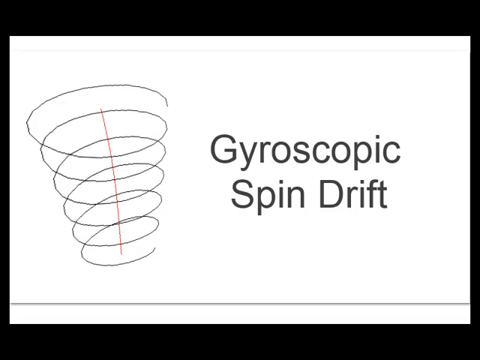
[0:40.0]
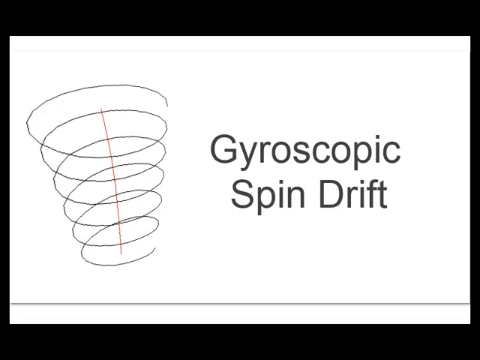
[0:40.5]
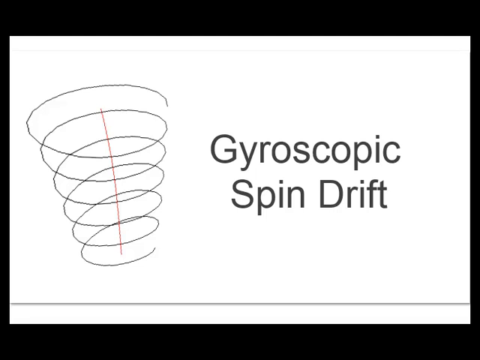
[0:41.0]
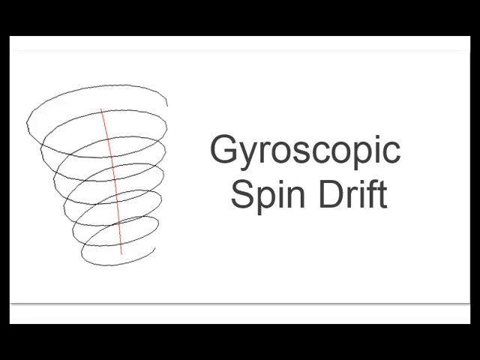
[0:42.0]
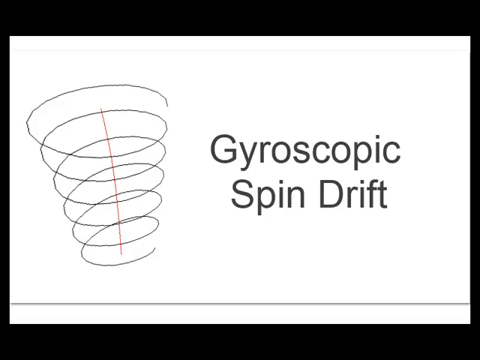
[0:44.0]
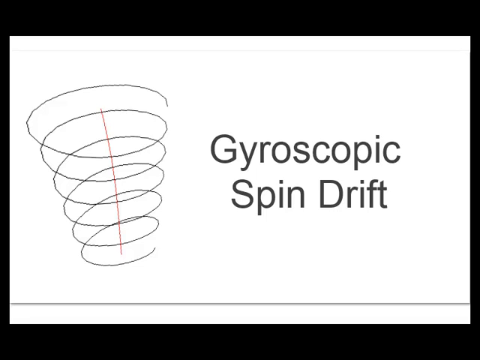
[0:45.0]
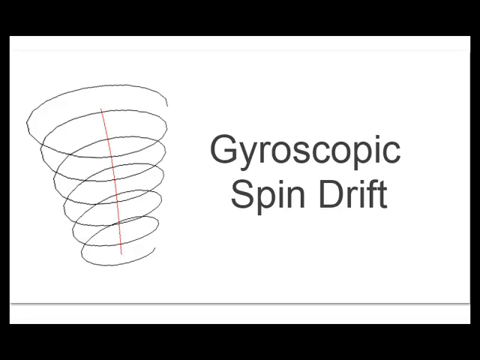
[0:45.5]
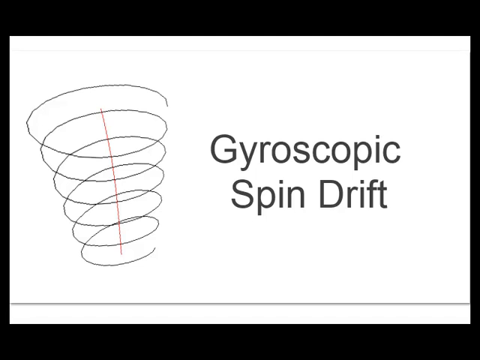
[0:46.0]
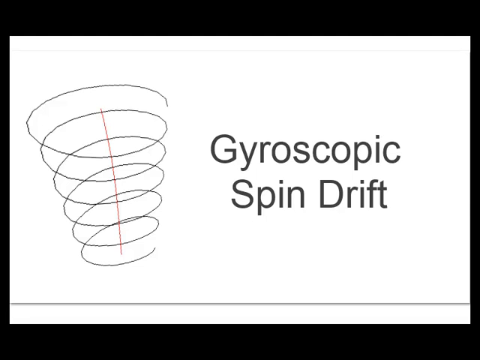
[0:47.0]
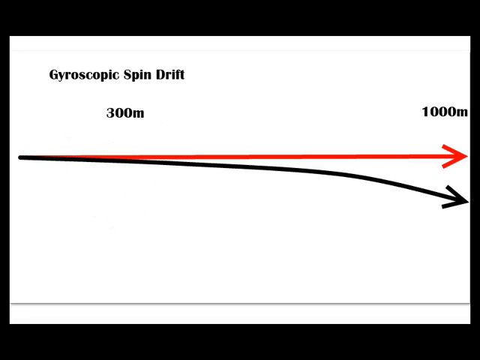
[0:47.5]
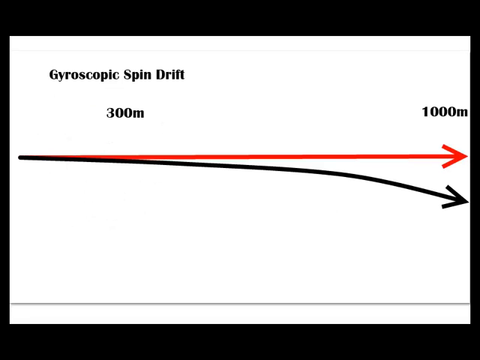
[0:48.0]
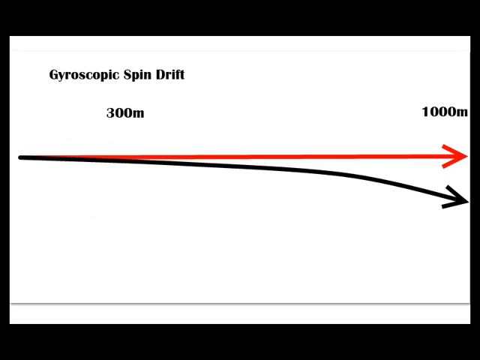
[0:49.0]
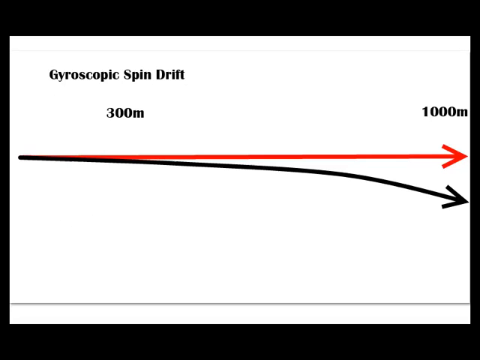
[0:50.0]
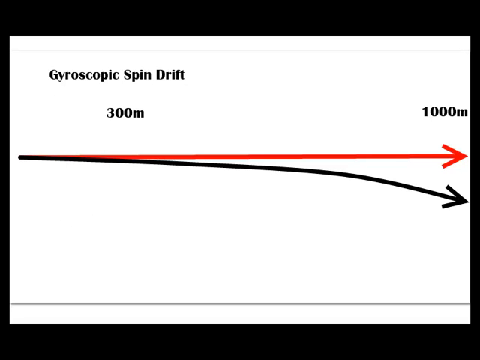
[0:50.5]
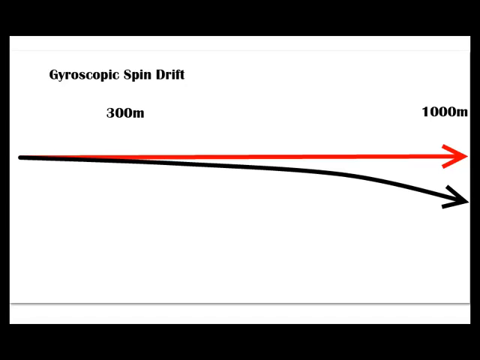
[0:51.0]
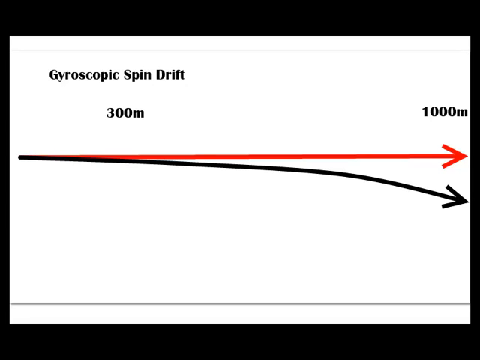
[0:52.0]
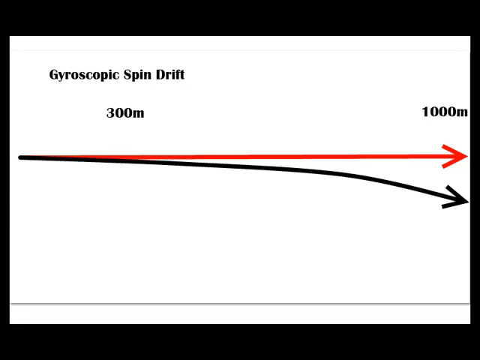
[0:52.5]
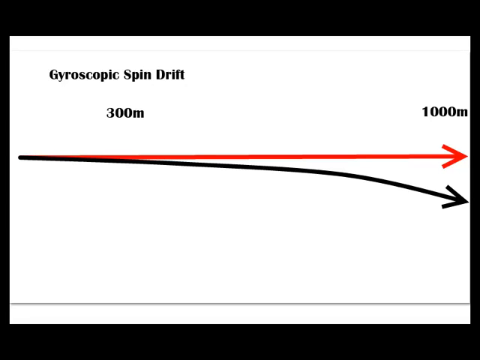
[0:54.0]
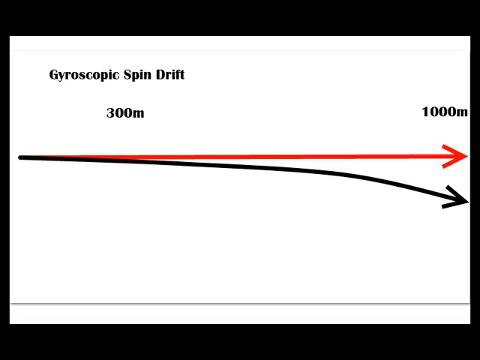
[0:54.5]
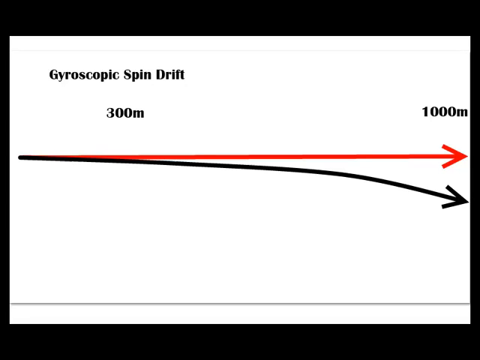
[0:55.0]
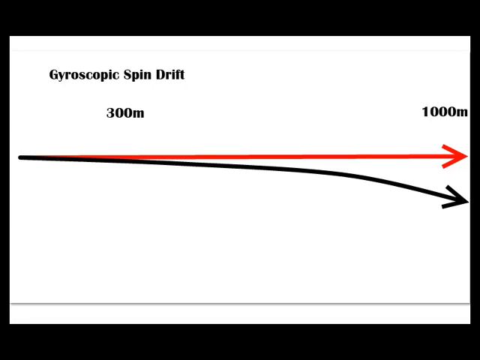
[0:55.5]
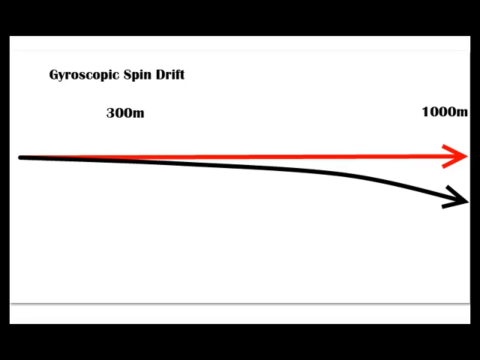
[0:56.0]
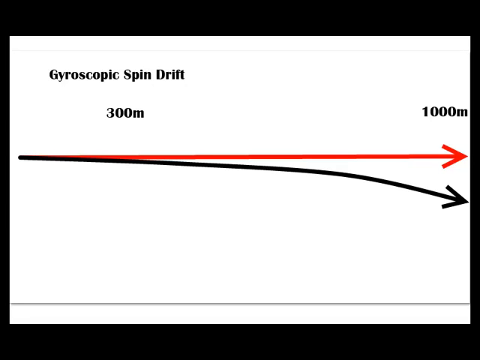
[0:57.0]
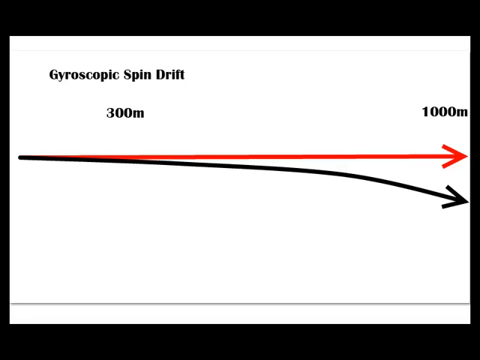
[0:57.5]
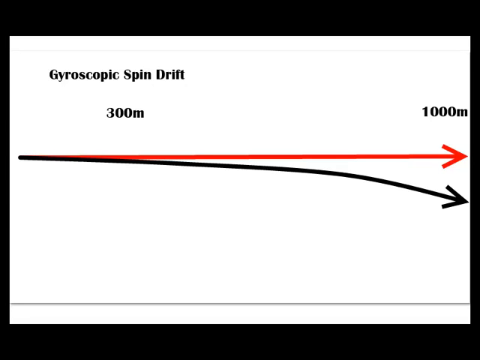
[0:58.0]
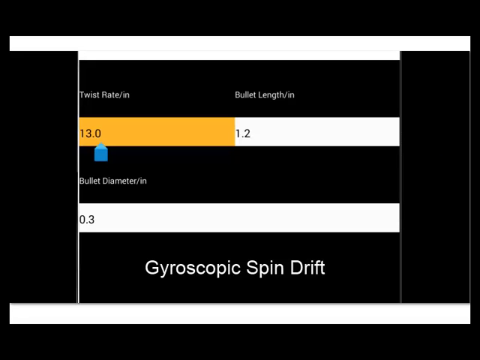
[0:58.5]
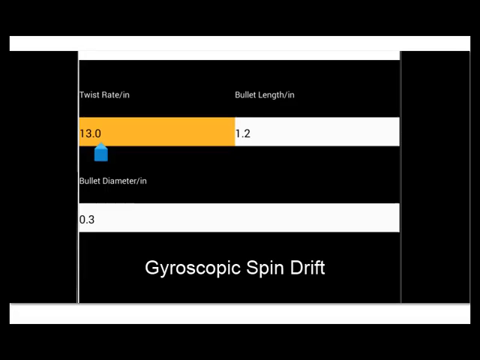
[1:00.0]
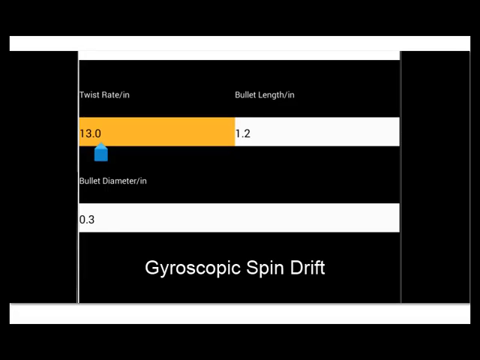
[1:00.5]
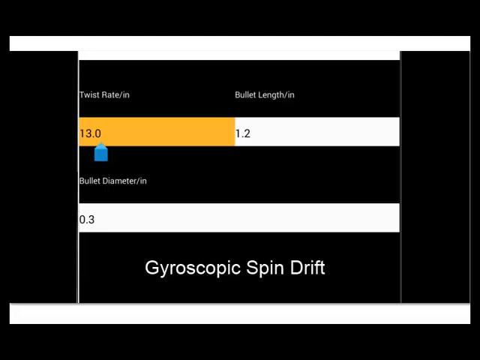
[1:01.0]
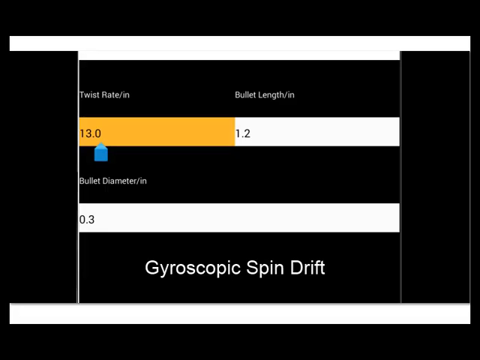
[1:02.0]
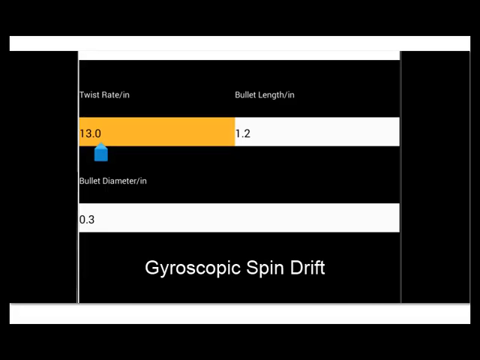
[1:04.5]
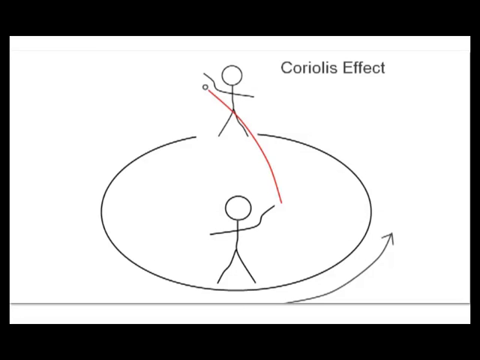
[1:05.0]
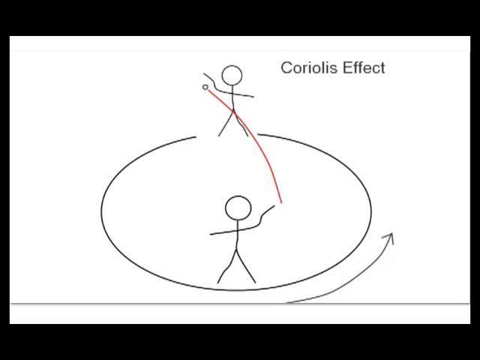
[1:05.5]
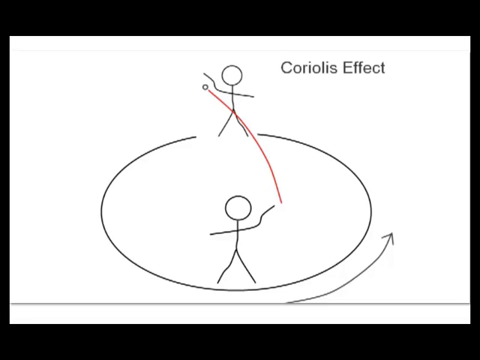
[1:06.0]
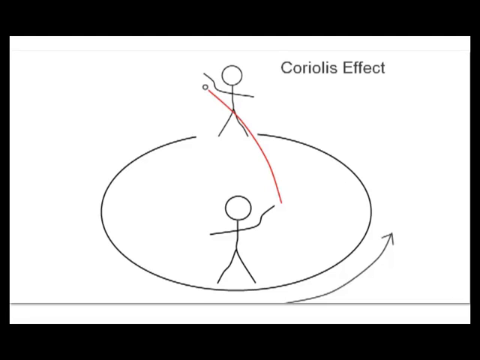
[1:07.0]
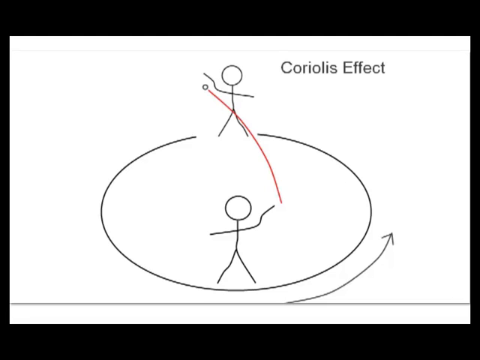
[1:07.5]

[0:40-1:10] The screen and background are completely white. On the left side is a big swirly circle with a line going through it, which looks like a spinning object or a tornado. On the right side the text says "gyroscopic spindrift", probably describing the spiraling circle to its left. The screen stays like that for about 5 seconds. The next screen shows two arrows intersecting each other, going from left to right, and then they split off: a red arrow goes straight horizontally while a black arrow strays away. It seems to show the gyroscopic spin drift at 300 meters, and going from left to right, a thousand meters appears on the right side.